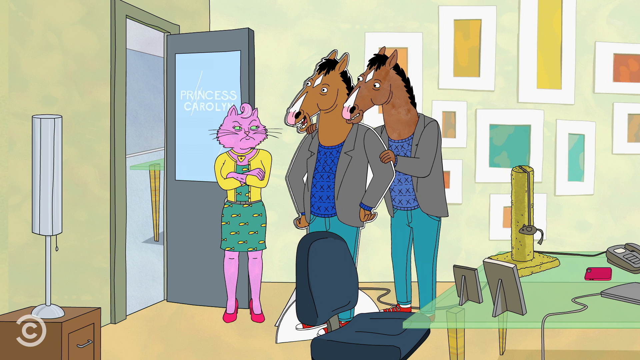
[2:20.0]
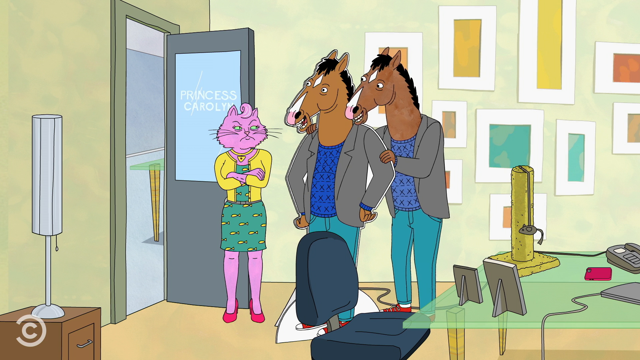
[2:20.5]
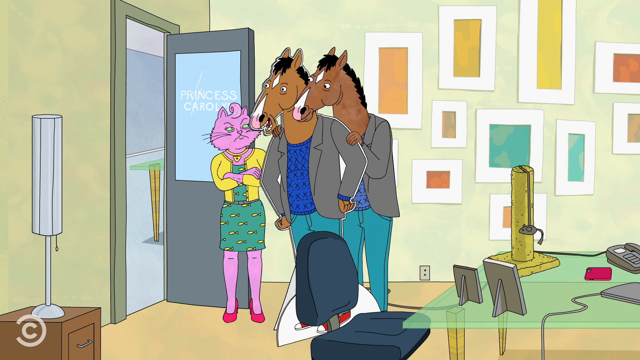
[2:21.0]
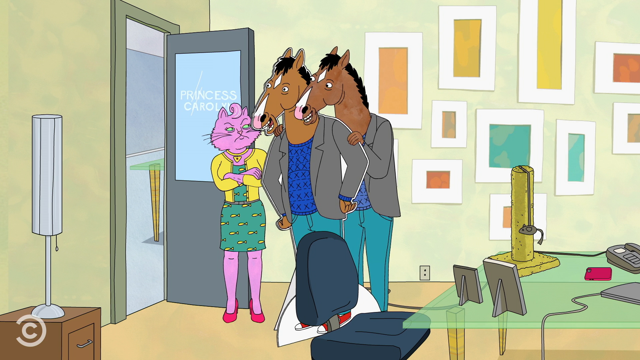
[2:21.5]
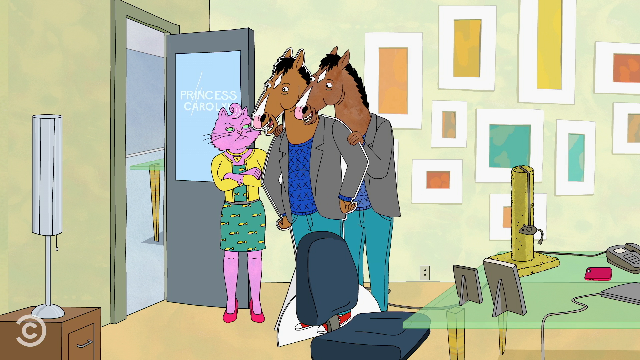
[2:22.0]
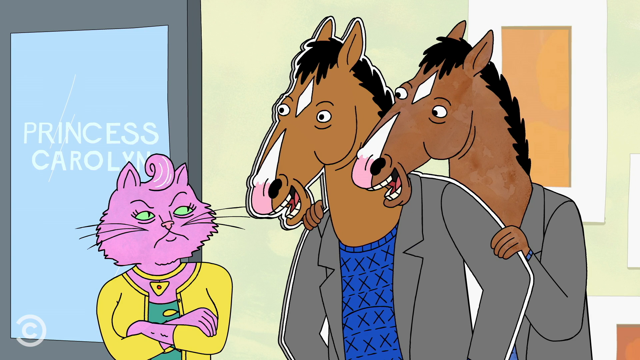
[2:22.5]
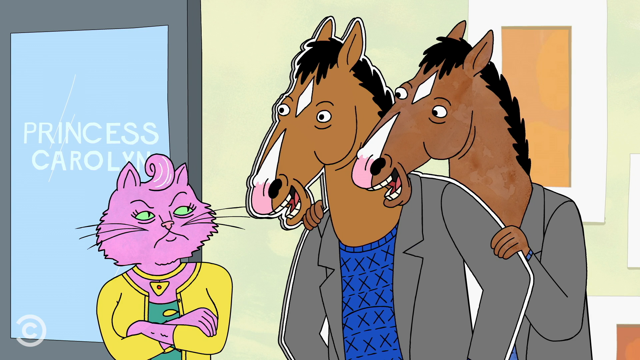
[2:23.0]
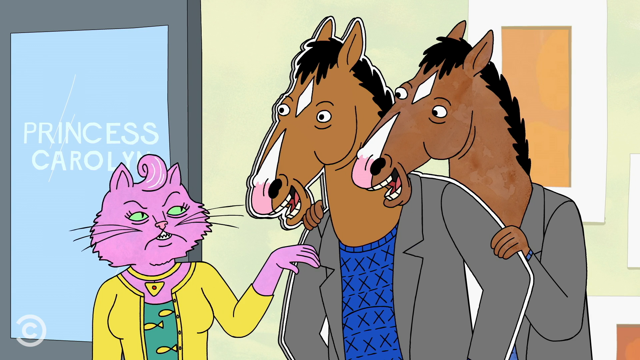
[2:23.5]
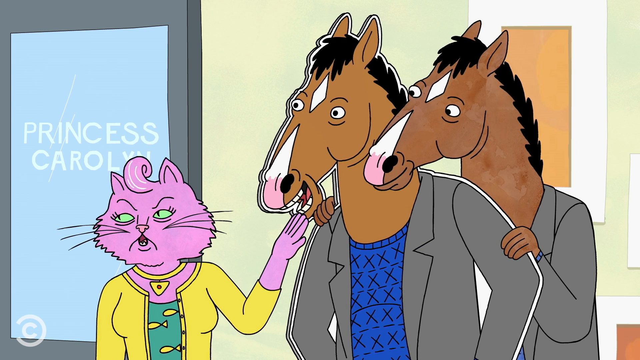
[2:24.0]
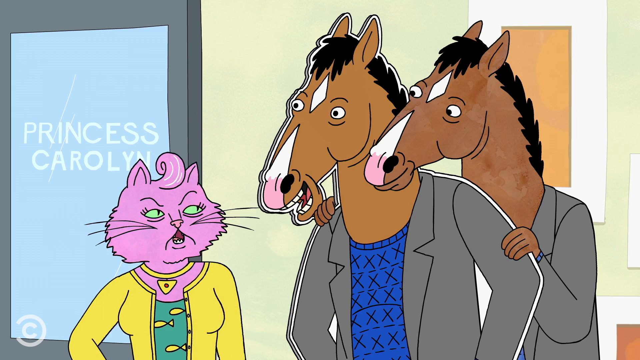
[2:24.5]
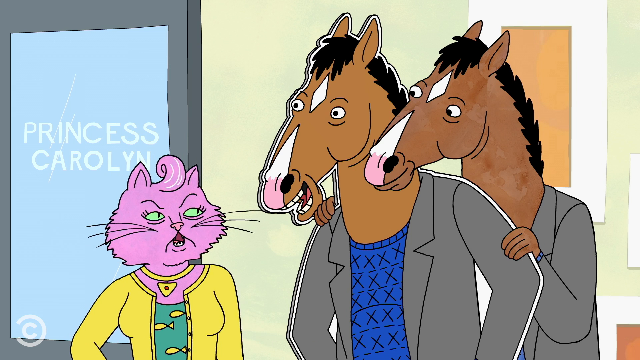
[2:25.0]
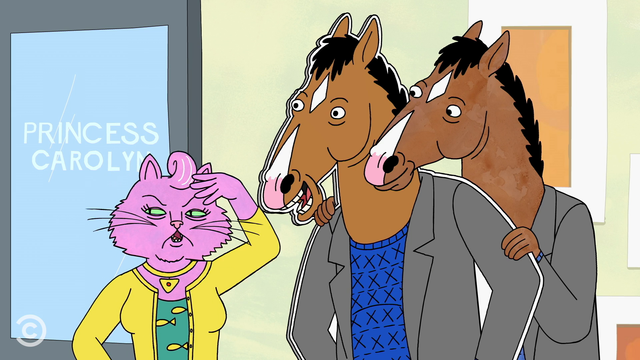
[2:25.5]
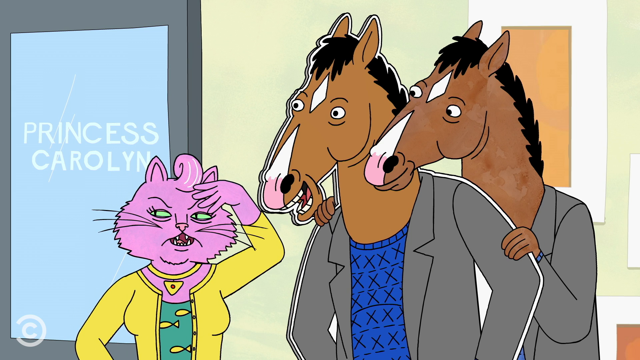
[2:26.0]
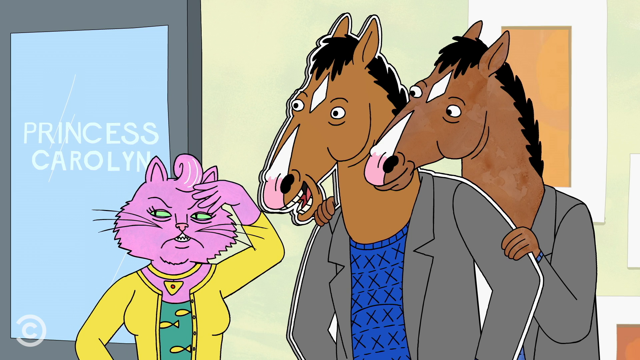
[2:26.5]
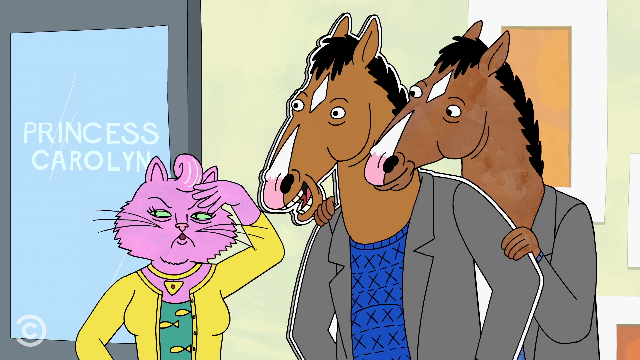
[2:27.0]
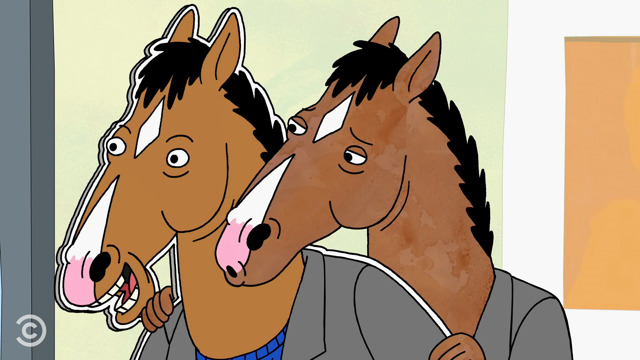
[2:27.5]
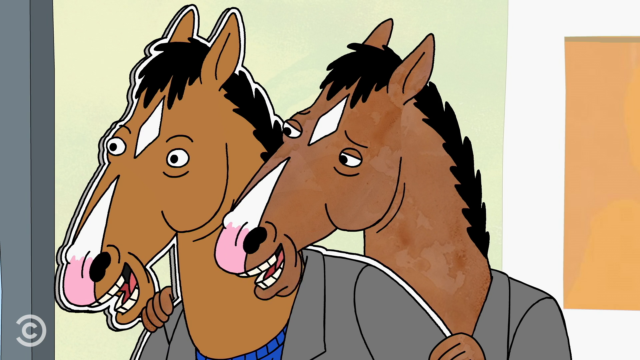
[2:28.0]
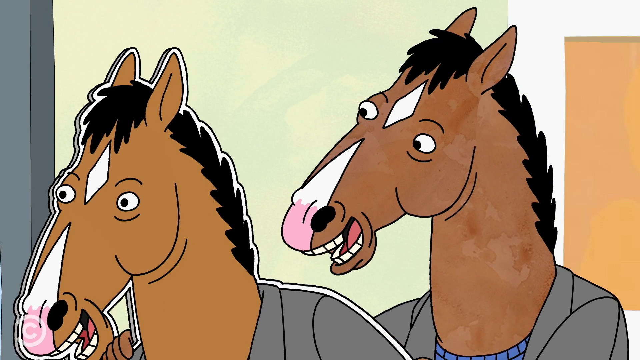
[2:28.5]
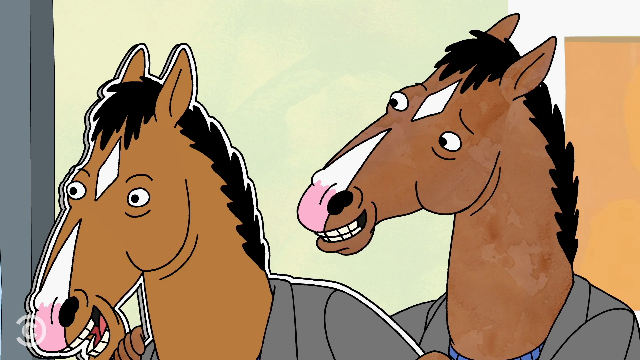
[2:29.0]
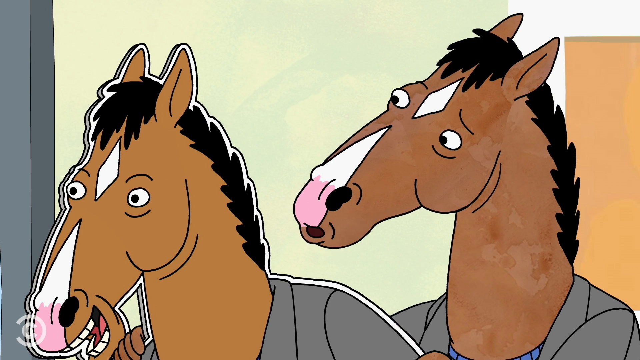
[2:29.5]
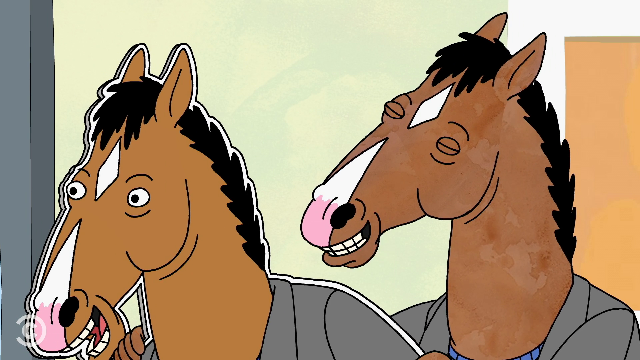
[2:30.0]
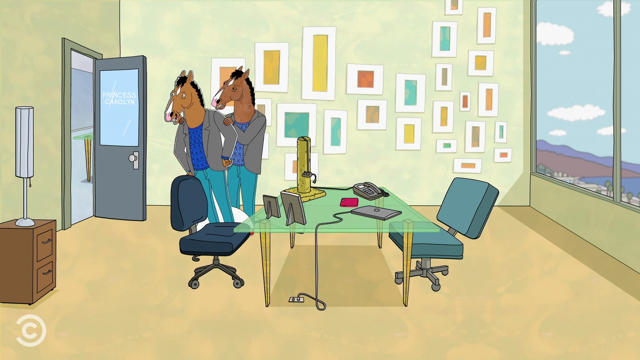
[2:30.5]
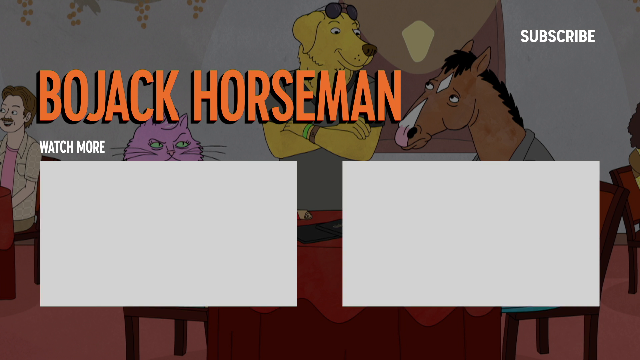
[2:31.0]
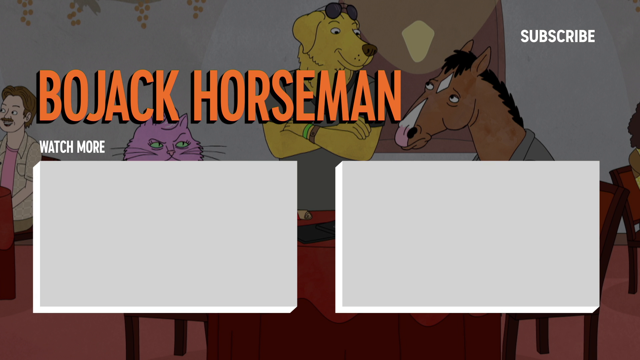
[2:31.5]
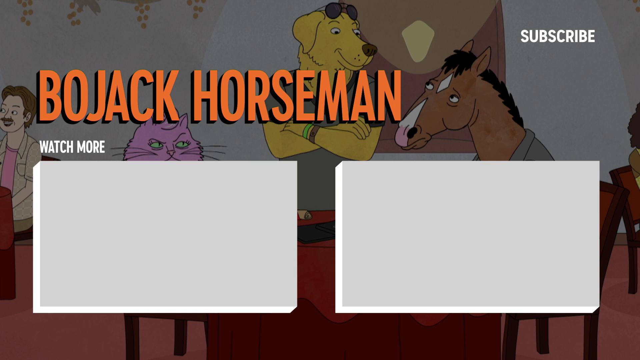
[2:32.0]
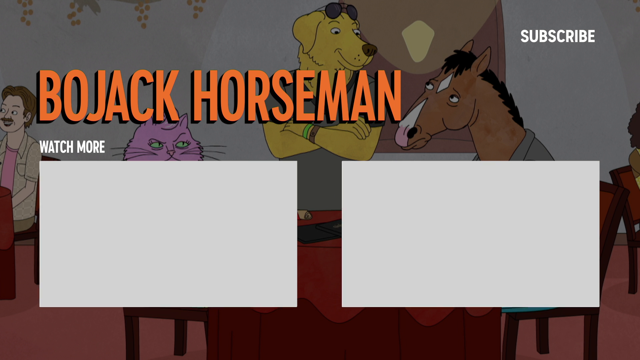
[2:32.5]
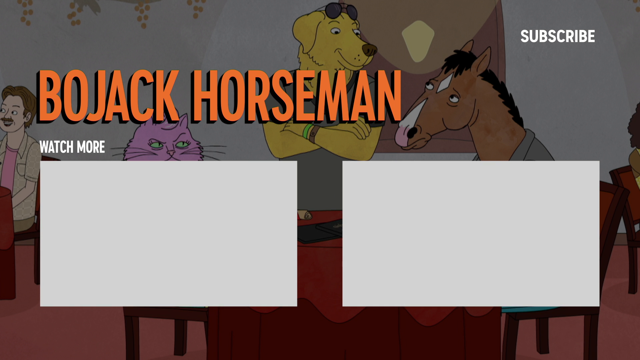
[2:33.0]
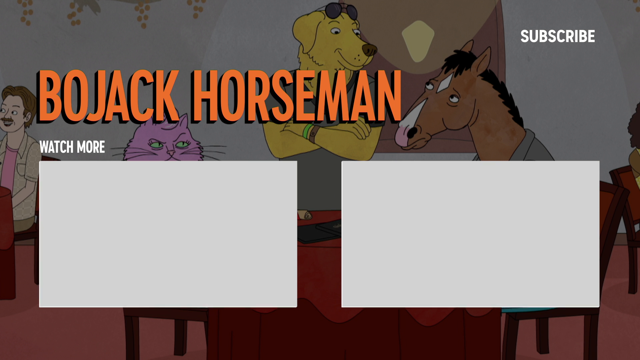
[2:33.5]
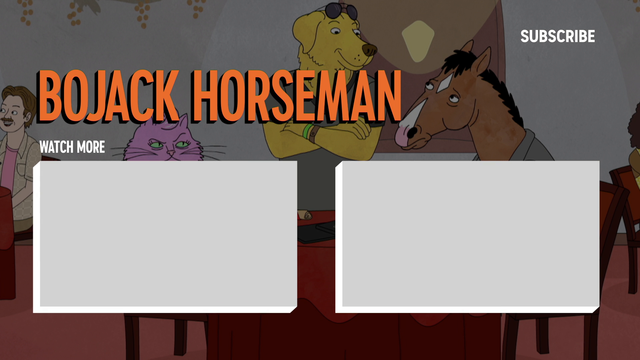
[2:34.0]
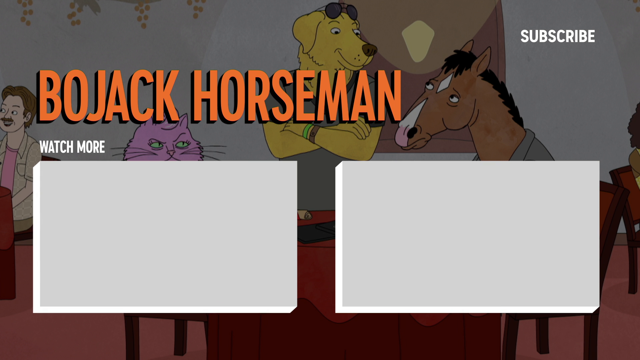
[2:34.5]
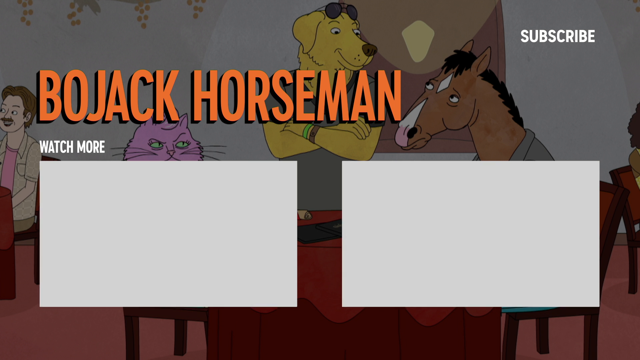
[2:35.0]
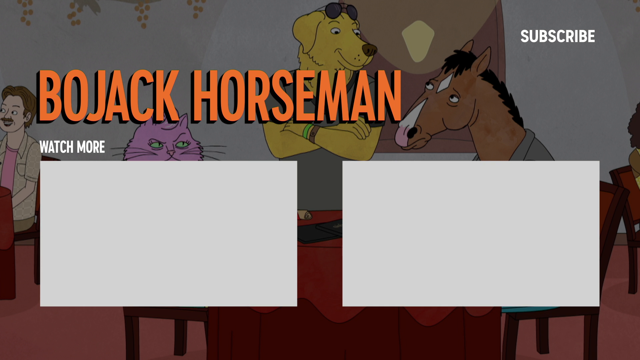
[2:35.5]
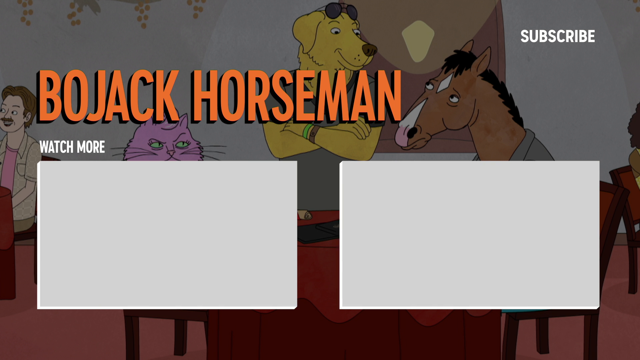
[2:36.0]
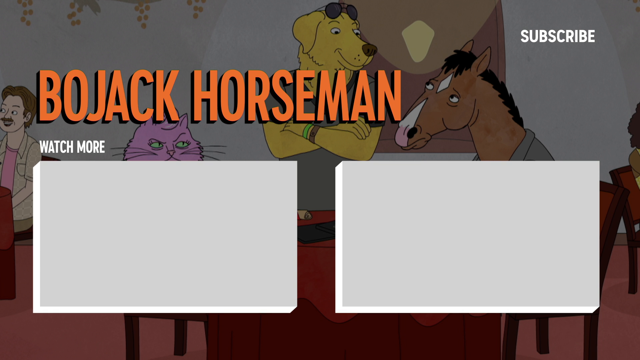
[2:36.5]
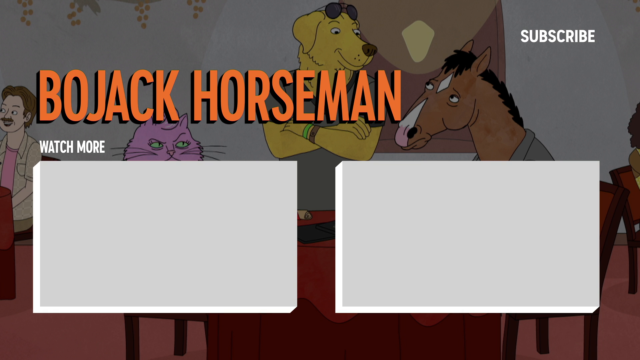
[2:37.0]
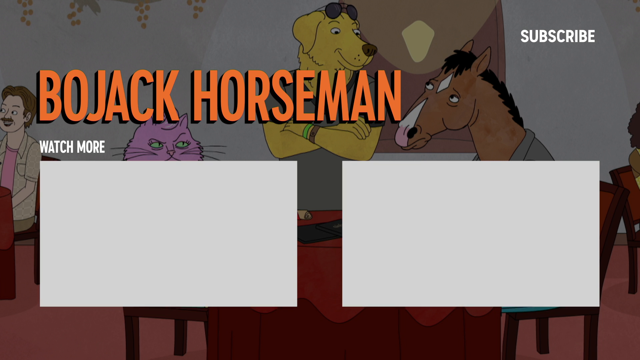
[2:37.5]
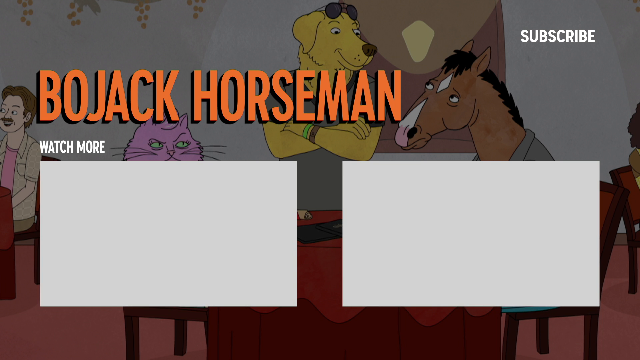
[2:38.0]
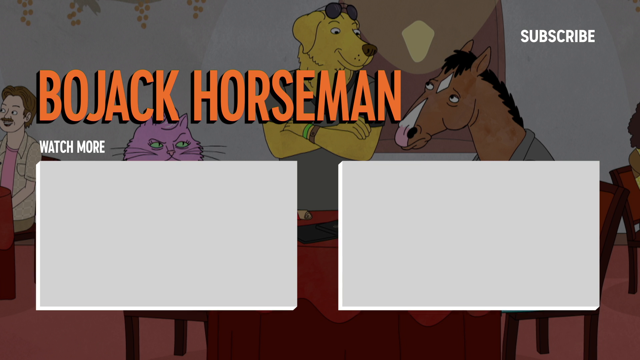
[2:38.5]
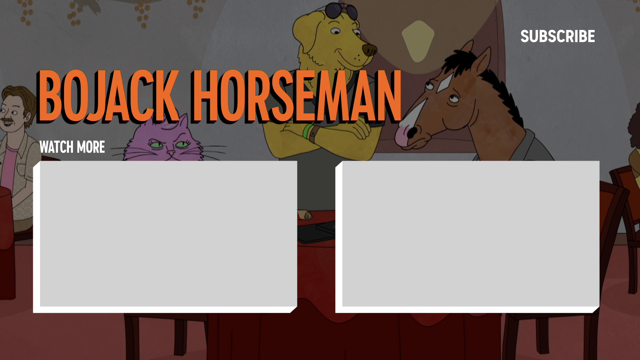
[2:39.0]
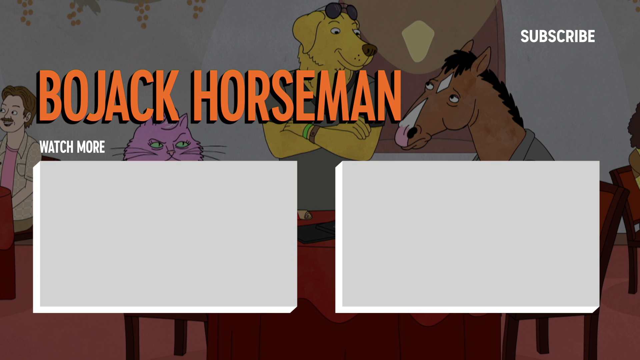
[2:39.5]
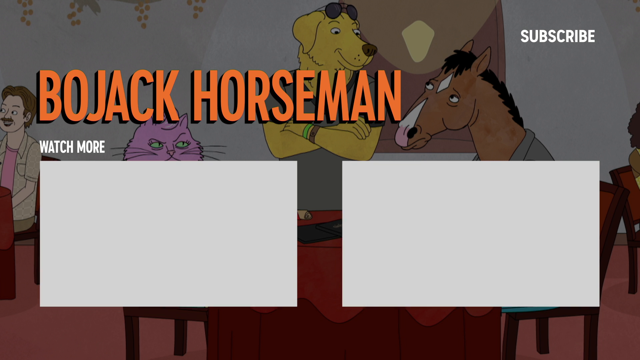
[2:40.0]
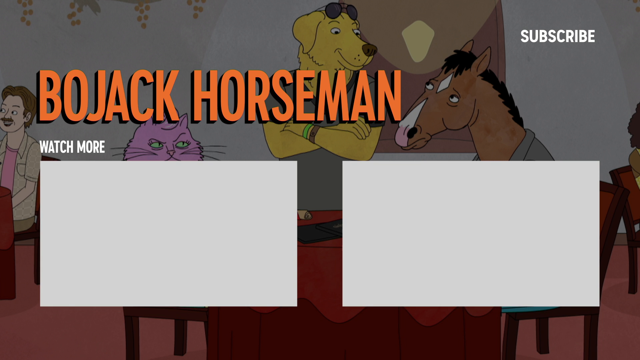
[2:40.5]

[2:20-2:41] The horse shows the cat the cardboard cutout of himself, pushes it toward her and puts his head next to it. A close-up of the two shows his head right next to the cutout's head while the cat looks up at him. She pushes him away, raises her hand, then puts her hand to her head and looks to the left. A close-up shows the horse standing with his head next to the cutout, talking; he looks confused and puts his head back. He is then standing alone with the cutout, the cat nowhere to be seen. The video cuts to a black screen with BoJack Horseman saying "subscribe", two video links, and the words "watch more" at the bottom of the screen, the videos pulsing as if to invite a click.